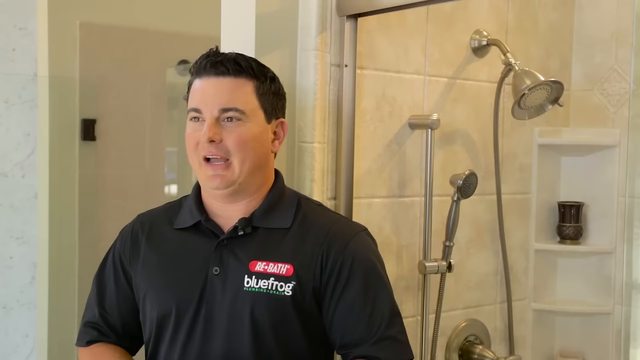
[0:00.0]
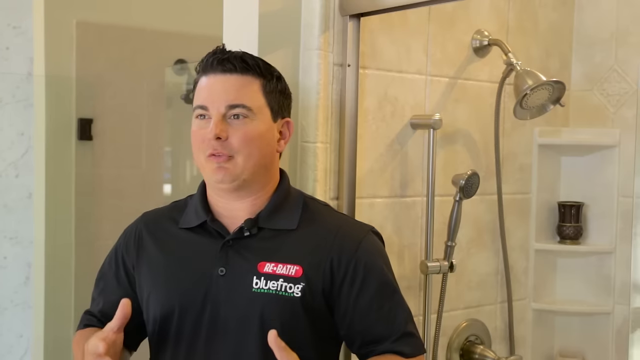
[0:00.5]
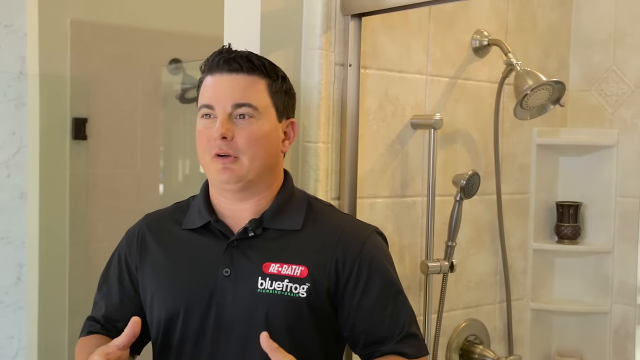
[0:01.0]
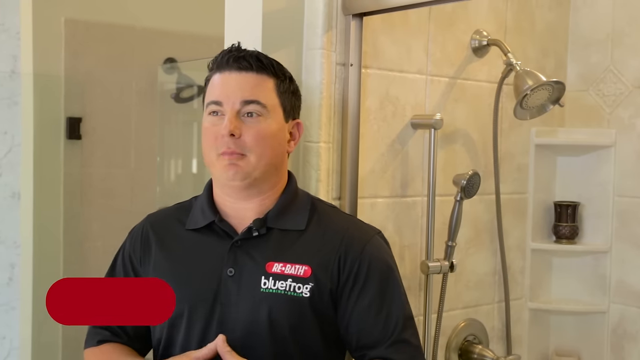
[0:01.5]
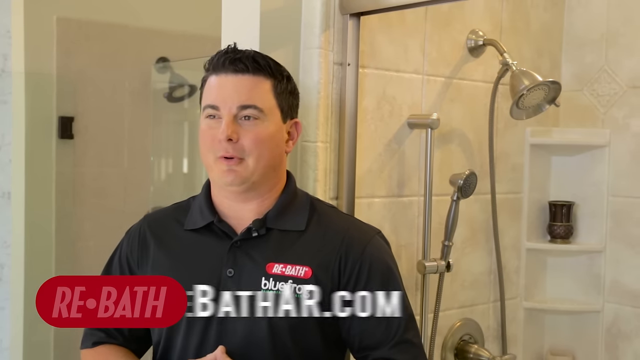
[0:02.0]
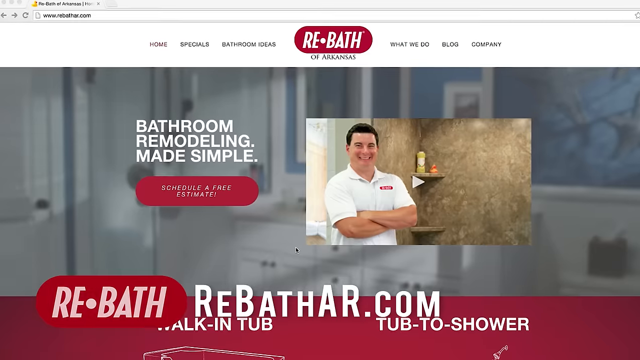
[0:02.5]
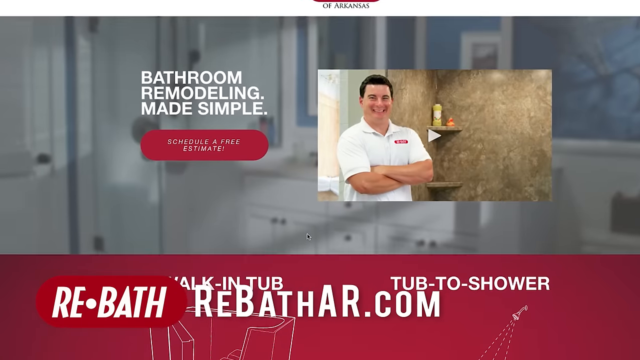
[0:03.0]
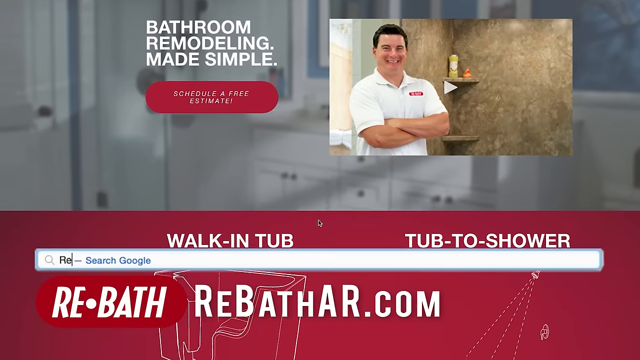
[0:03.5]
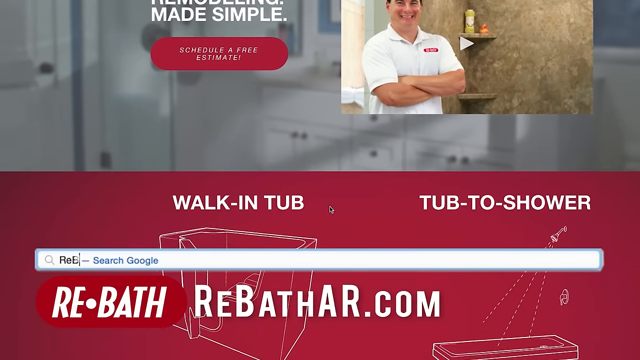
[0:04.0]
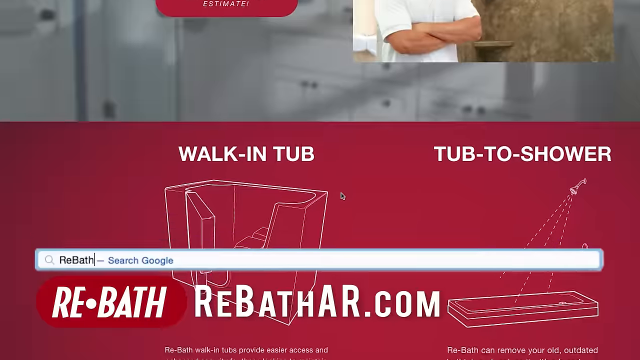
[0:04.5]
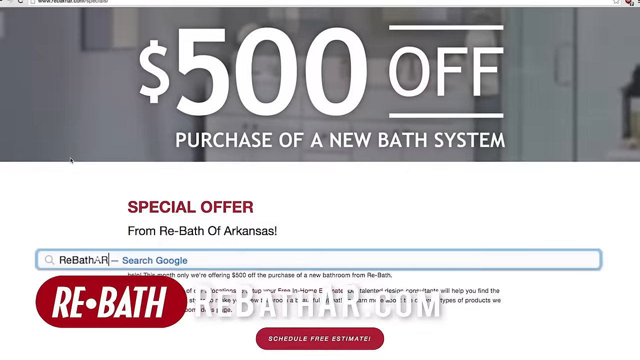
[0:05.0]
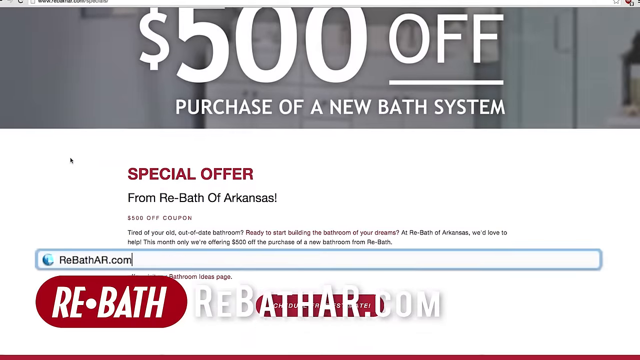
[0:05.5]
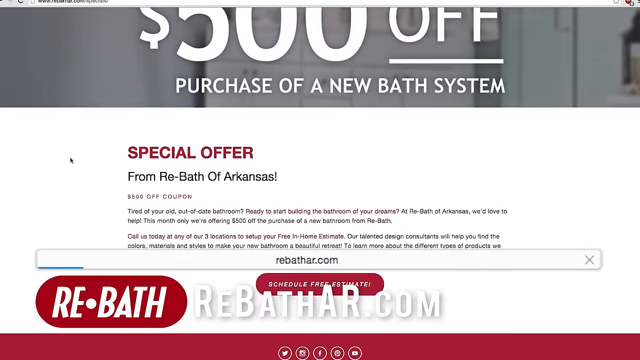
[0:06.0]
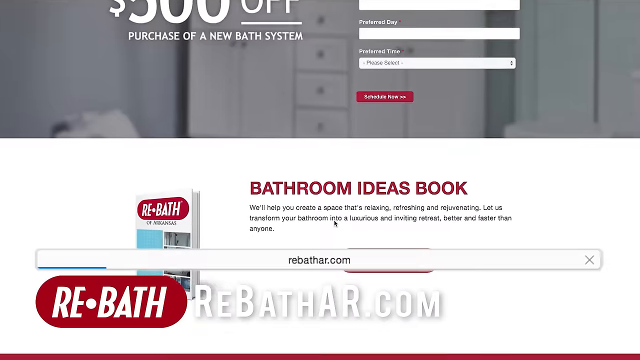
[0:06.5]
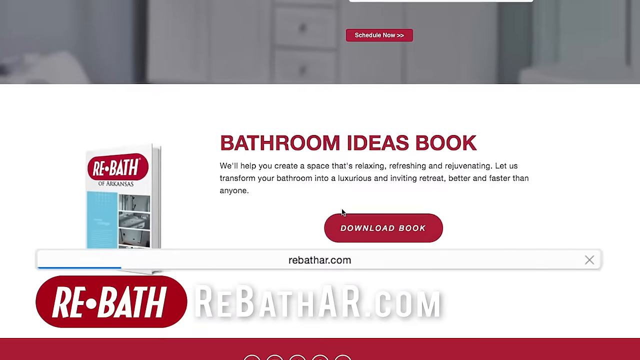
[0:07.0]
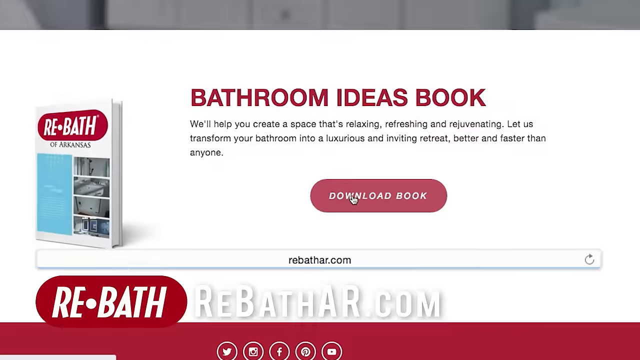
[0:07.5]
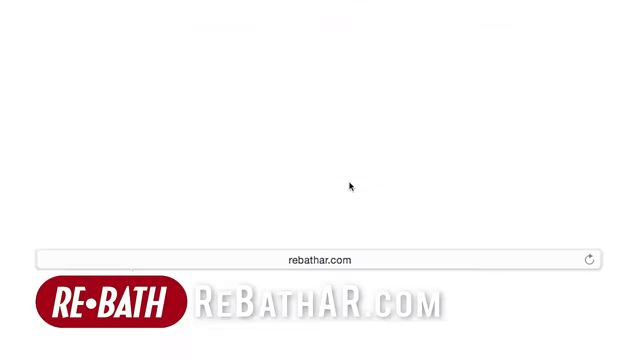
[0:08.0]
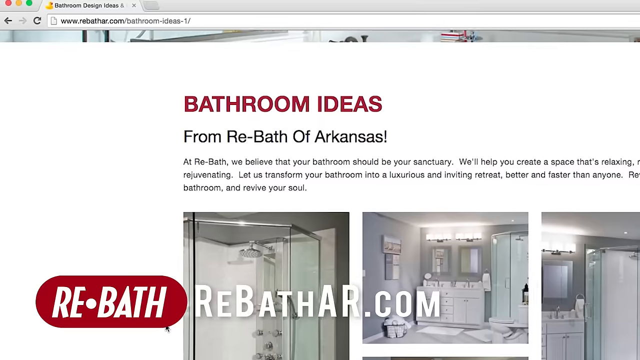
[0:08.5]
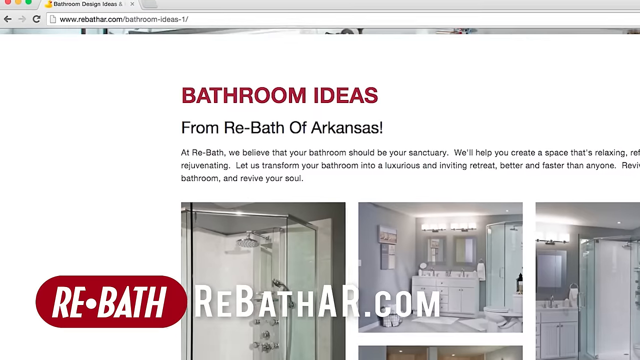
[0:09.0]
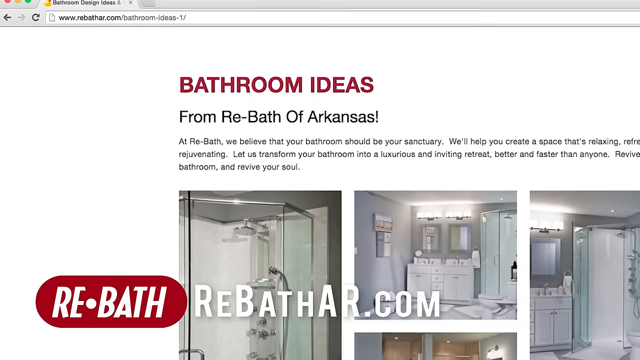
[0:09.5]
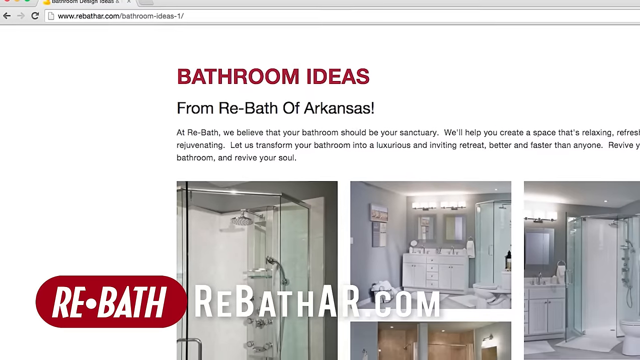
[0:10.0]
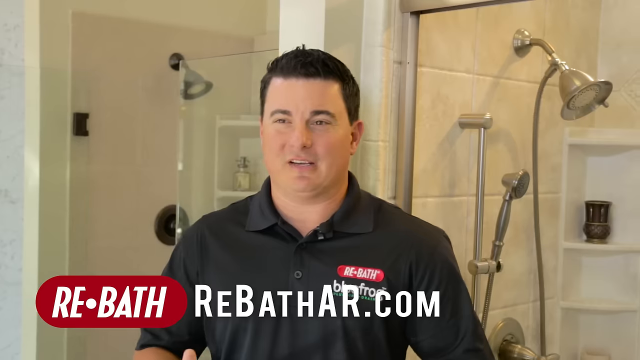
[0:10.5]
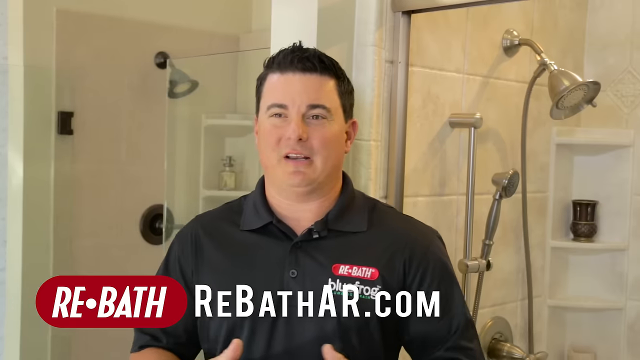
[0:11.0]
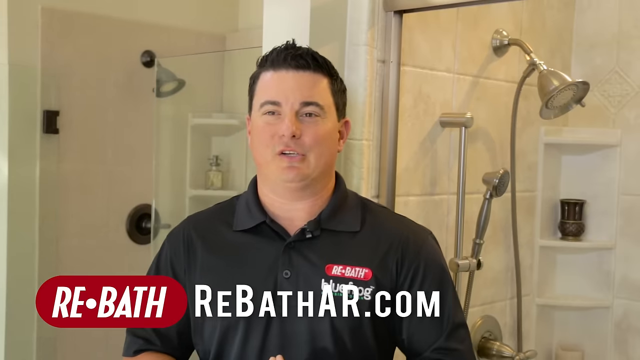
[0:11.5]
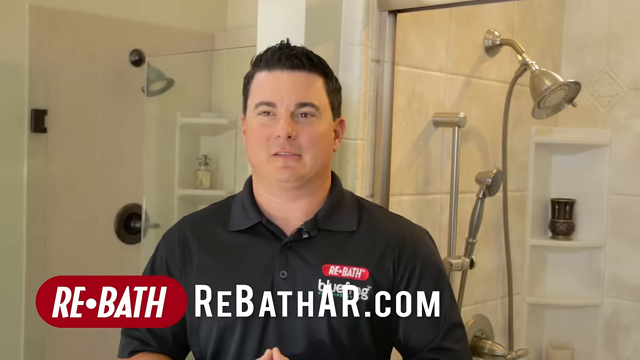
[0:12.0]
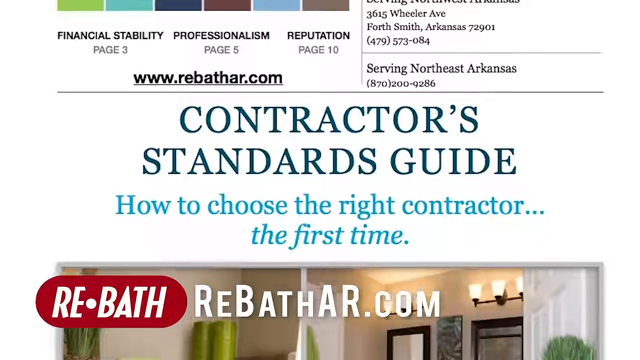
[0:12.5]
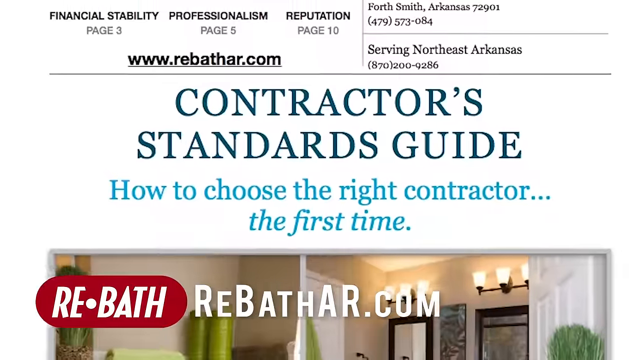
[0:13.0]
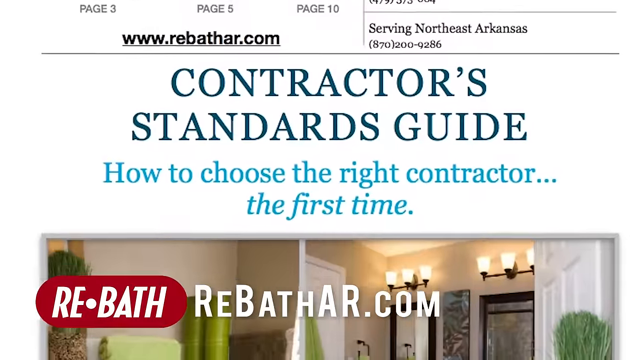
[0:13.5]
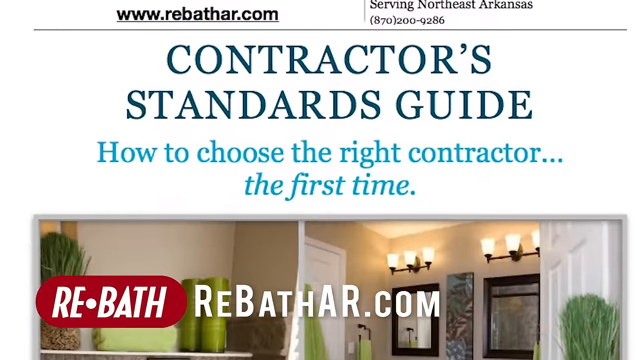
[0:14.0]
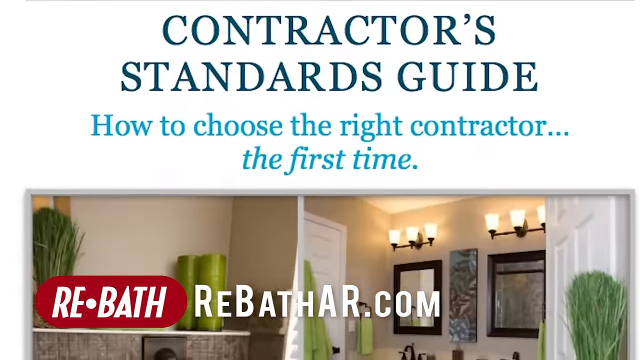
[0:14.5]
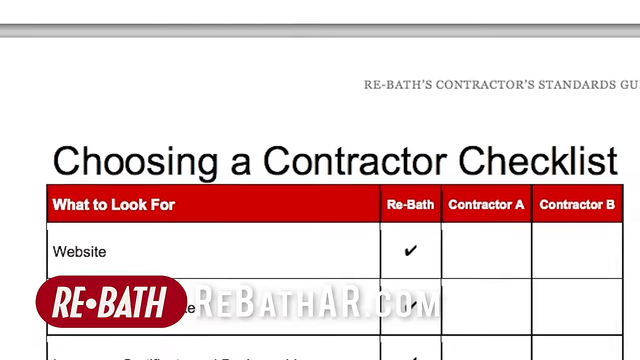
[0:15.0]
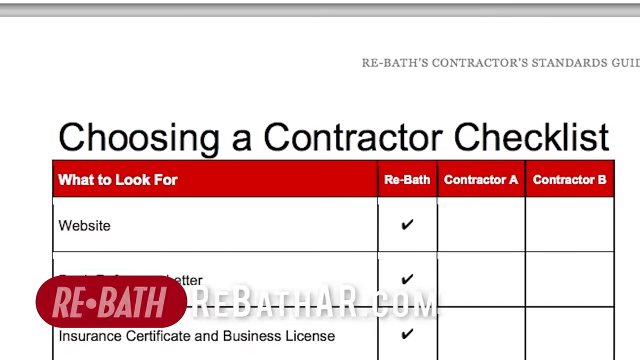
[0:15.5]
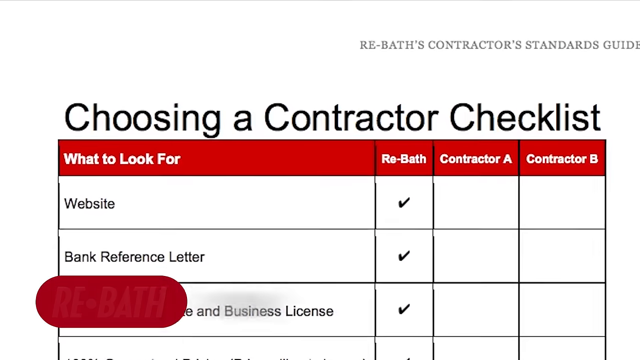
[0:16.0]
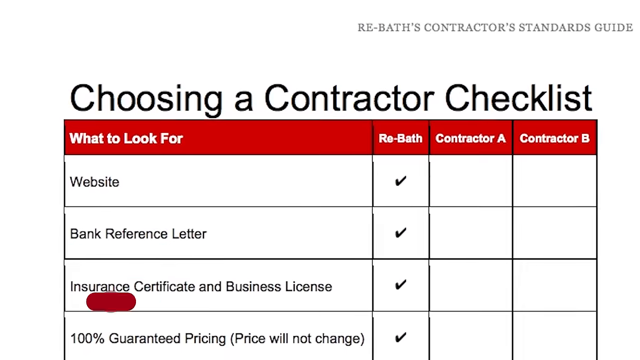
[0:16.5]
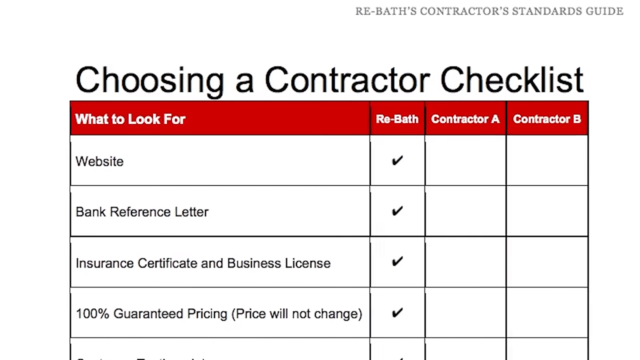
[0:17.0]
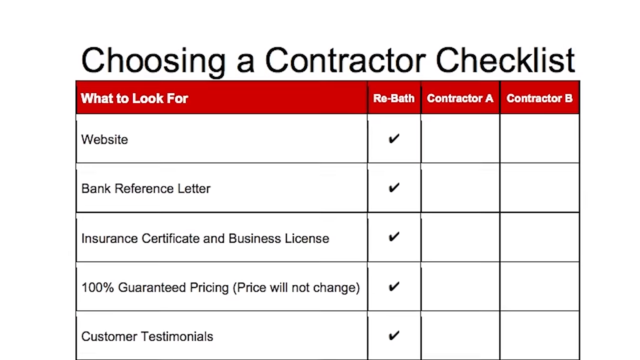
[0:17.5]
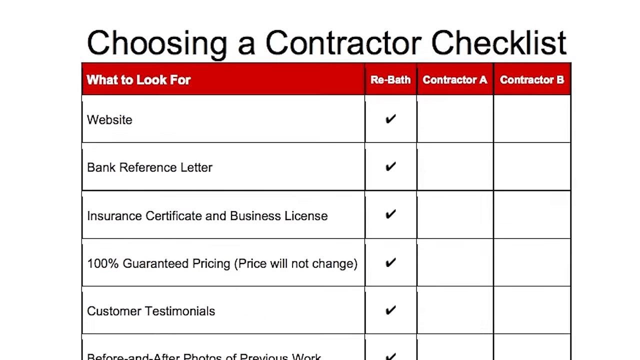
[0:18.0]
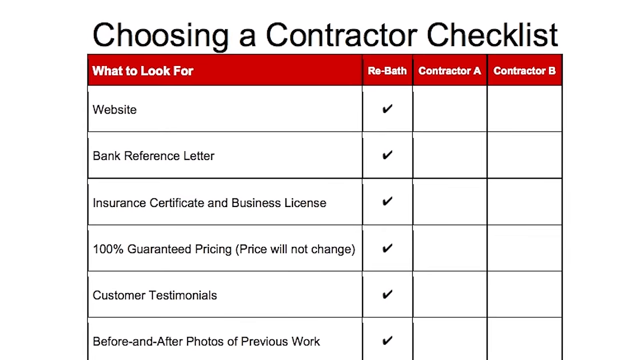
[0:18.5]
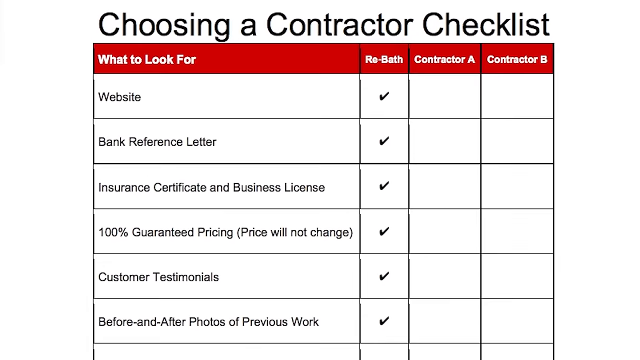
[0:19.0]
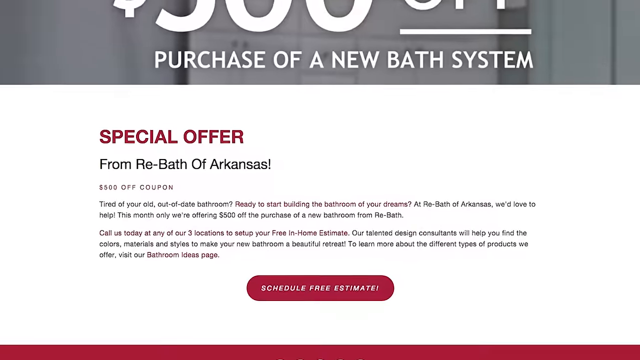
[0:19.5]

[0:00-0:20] A man with dark hair wears a black polo with something near the left breast pocket that says "Blue Frog". He stands in a bathroom area with a shower head behind him, talking to the camera, while an animation at the bottom reads "RebathAR.com". The video cuts to a computer screen showing a website that reads "Bathroom Remodeling Made Simple" and "Schedule a free estimate". On the right side there is a video in which a man in a white polo poses in a photo in a bathroom area, with the text "Walk-In Tub, Tub to Shower". In the bottom area, "RebathAR.com" is being typed into a search bar. The video then cuts to another screen that reads "$500 off purchase of a new bath system".